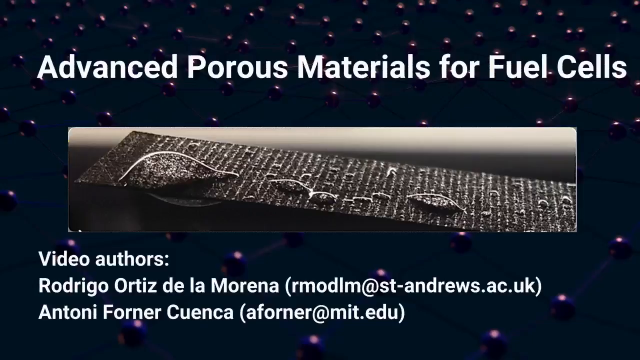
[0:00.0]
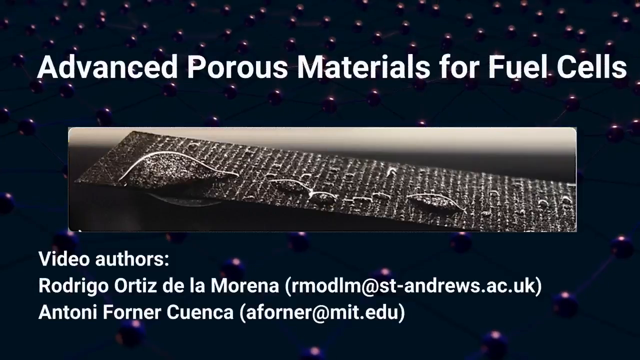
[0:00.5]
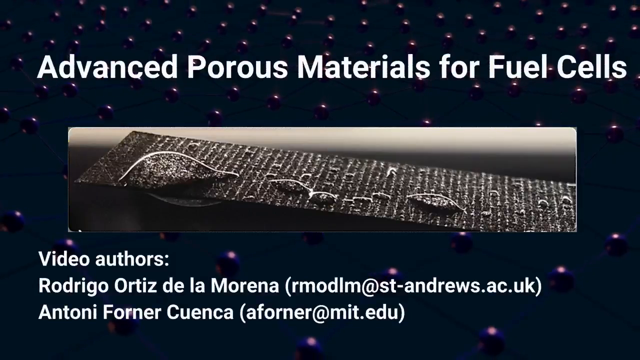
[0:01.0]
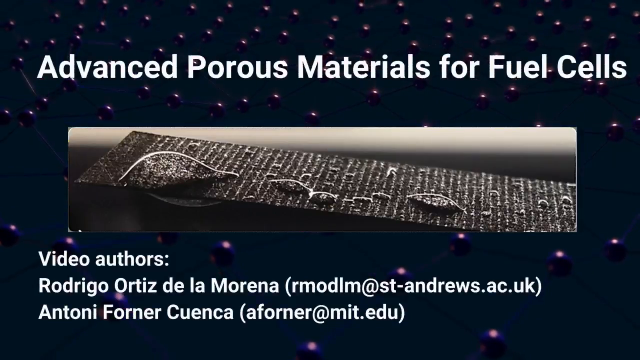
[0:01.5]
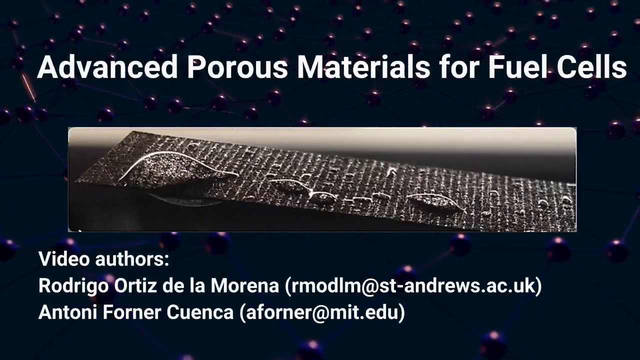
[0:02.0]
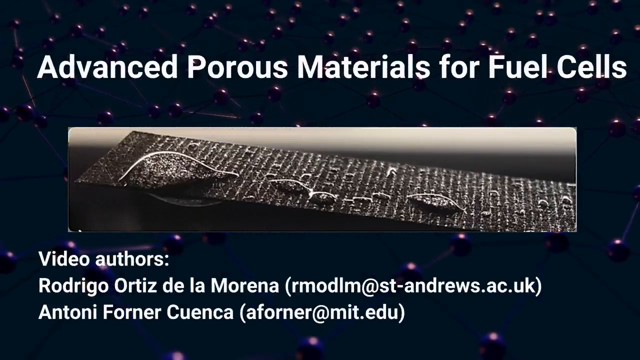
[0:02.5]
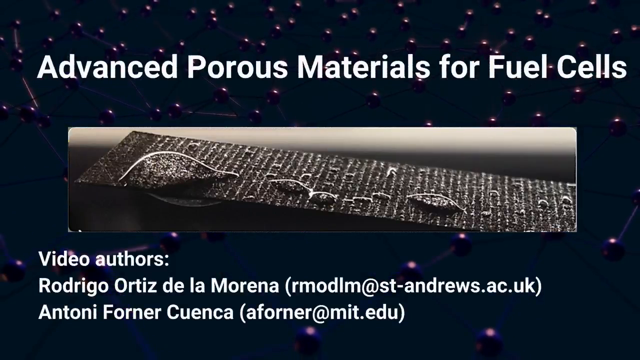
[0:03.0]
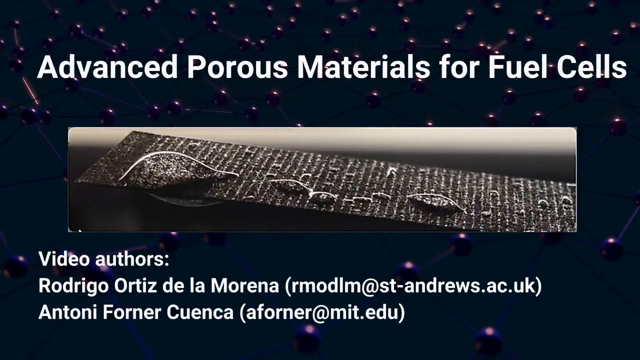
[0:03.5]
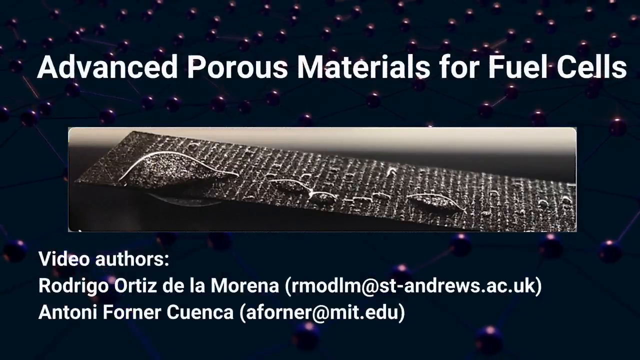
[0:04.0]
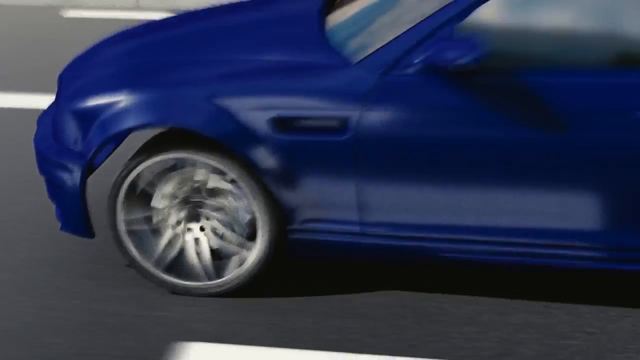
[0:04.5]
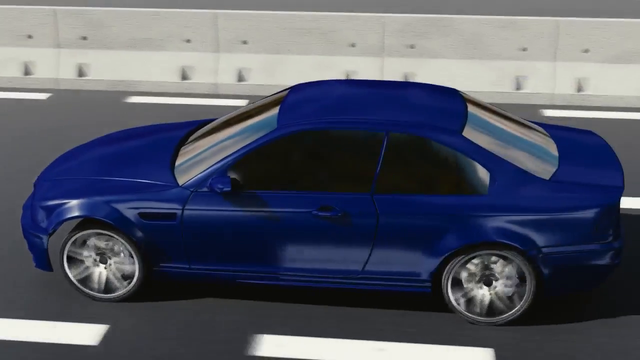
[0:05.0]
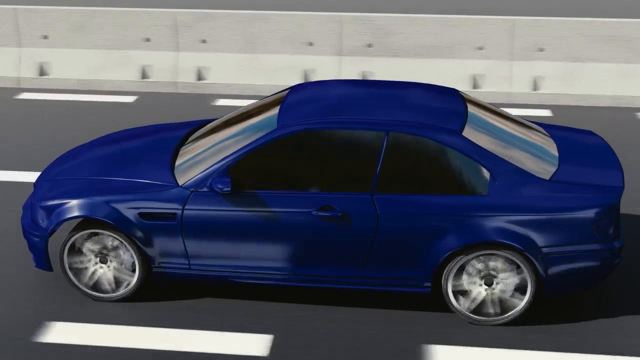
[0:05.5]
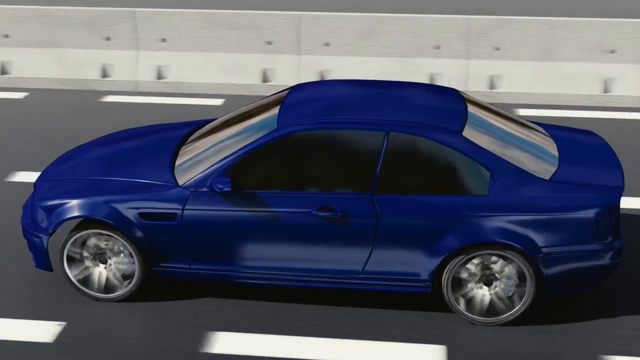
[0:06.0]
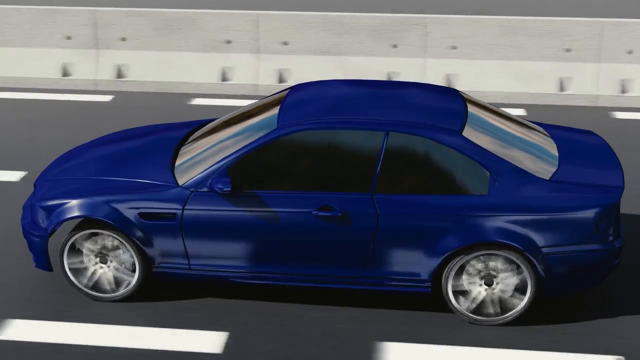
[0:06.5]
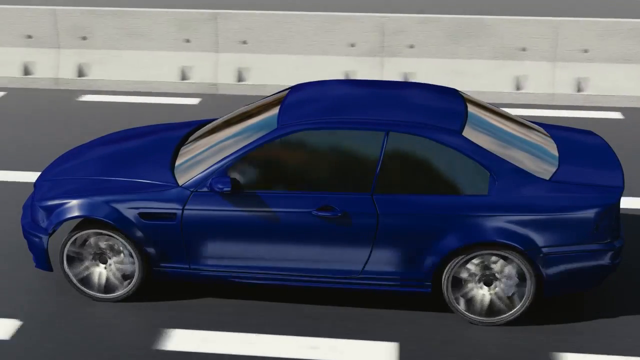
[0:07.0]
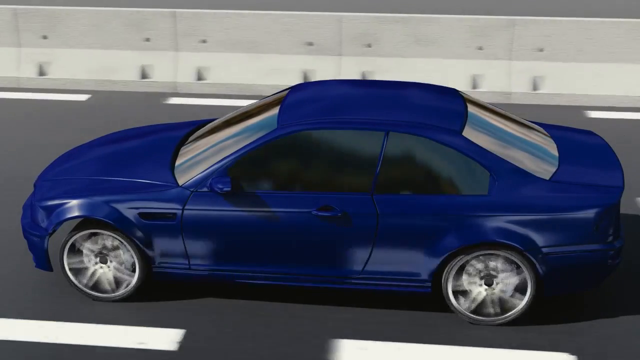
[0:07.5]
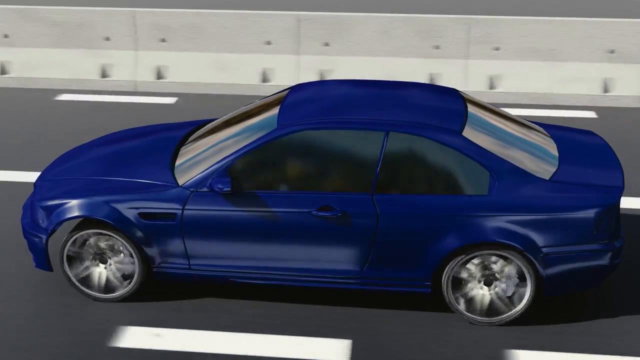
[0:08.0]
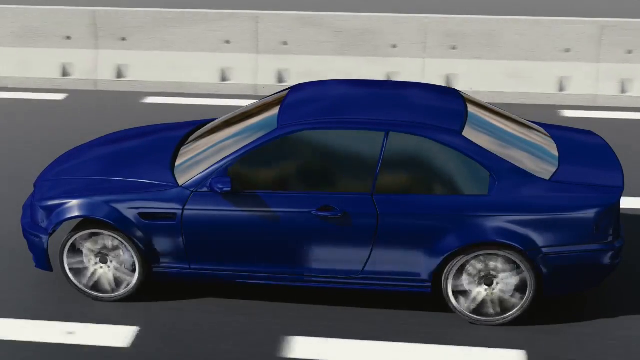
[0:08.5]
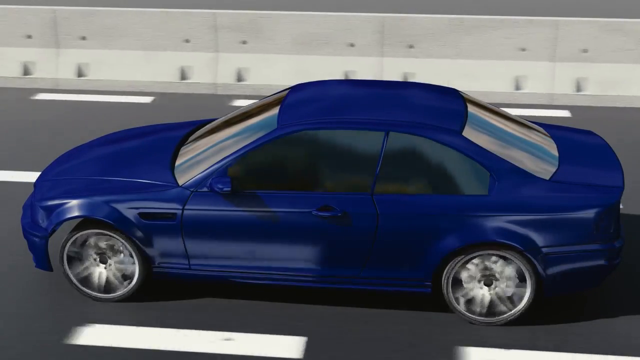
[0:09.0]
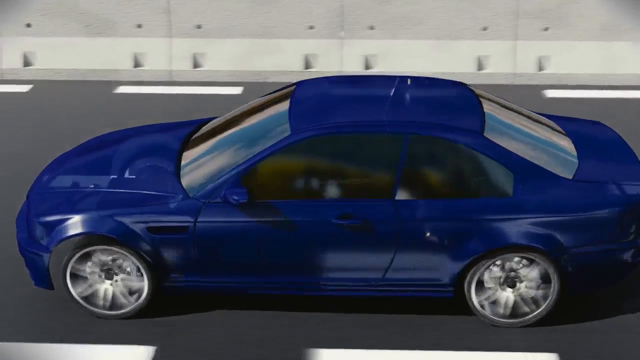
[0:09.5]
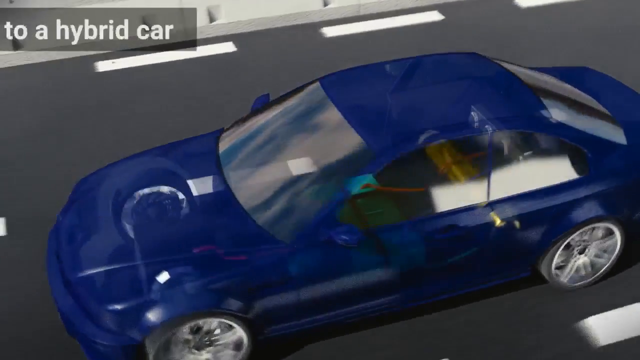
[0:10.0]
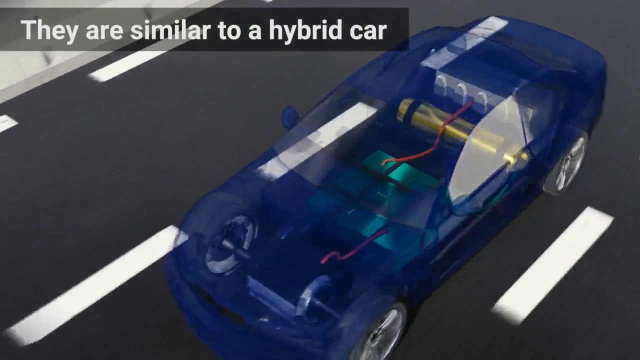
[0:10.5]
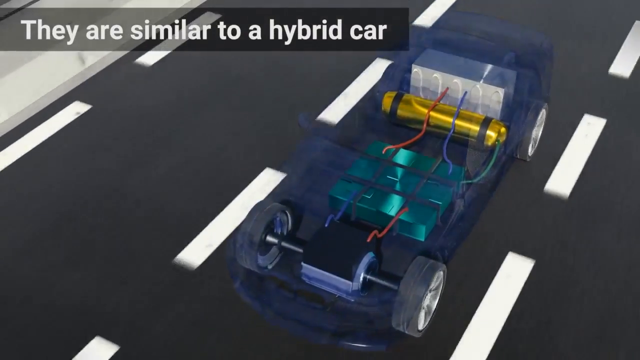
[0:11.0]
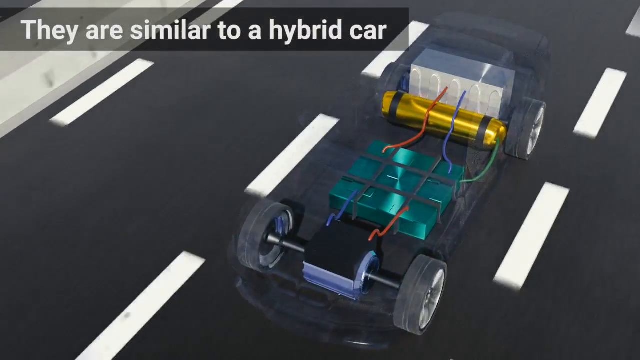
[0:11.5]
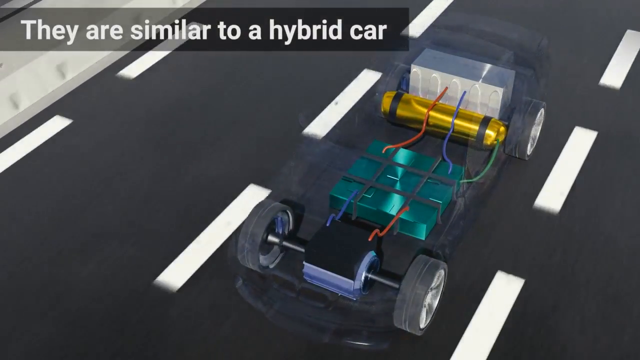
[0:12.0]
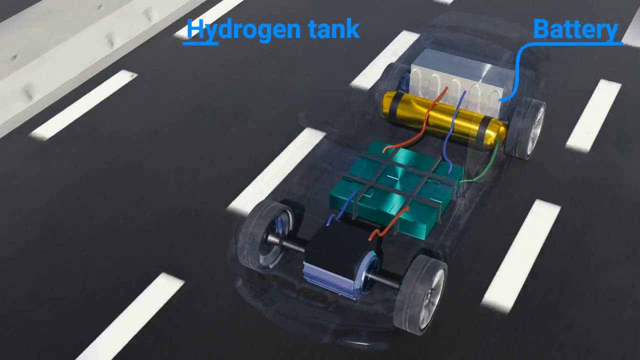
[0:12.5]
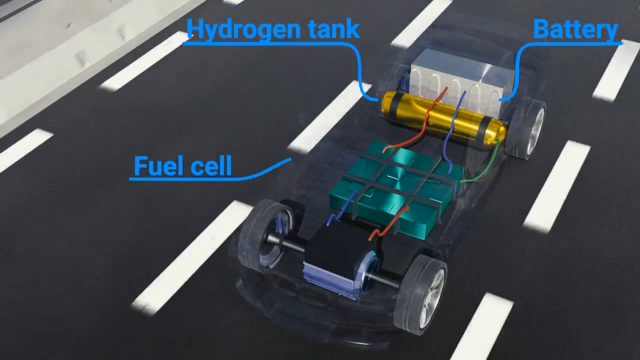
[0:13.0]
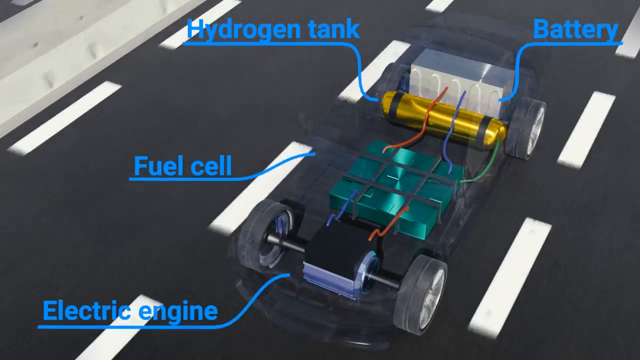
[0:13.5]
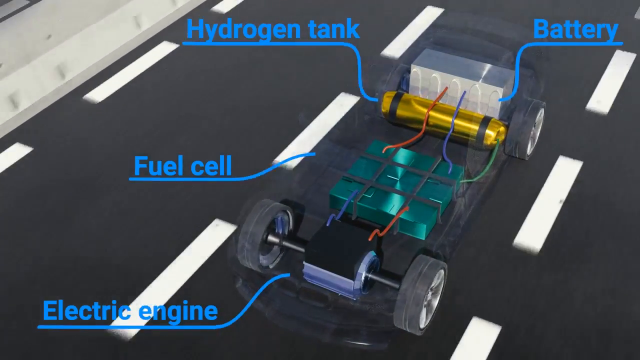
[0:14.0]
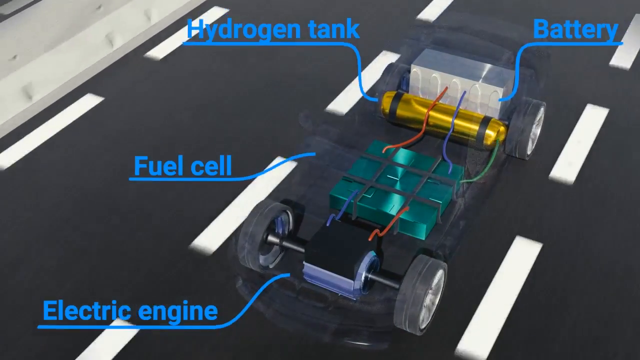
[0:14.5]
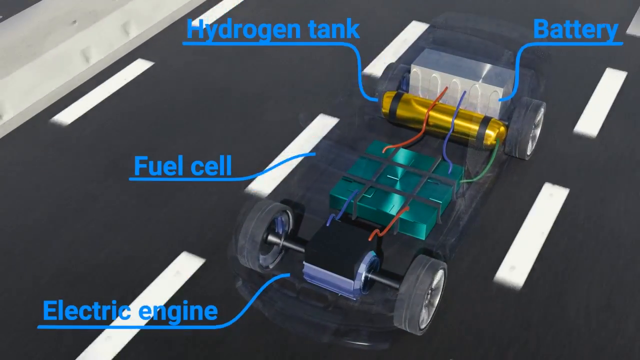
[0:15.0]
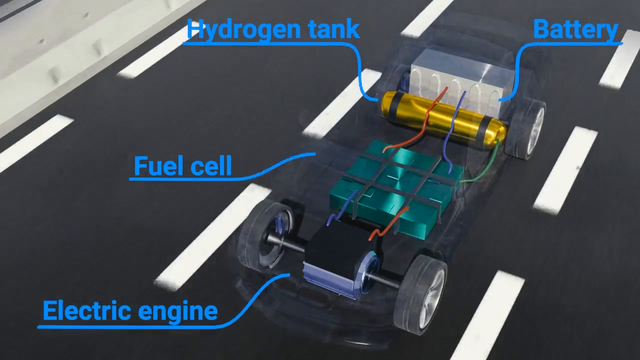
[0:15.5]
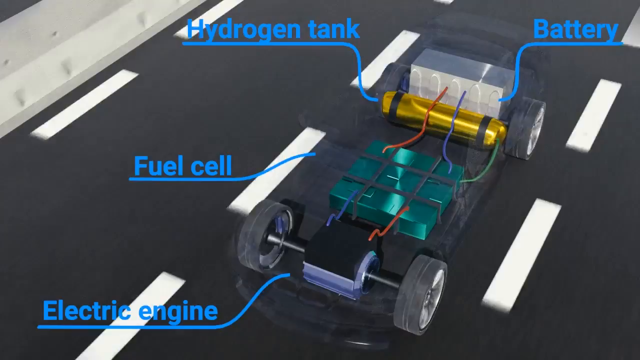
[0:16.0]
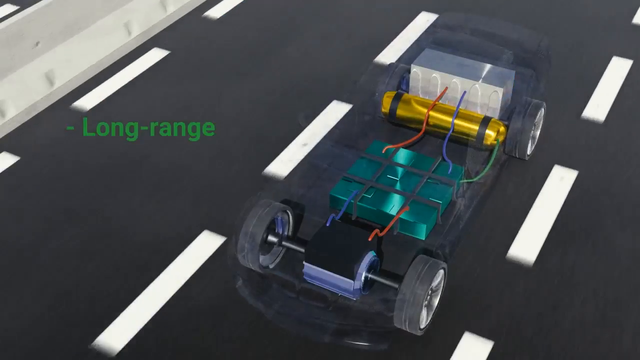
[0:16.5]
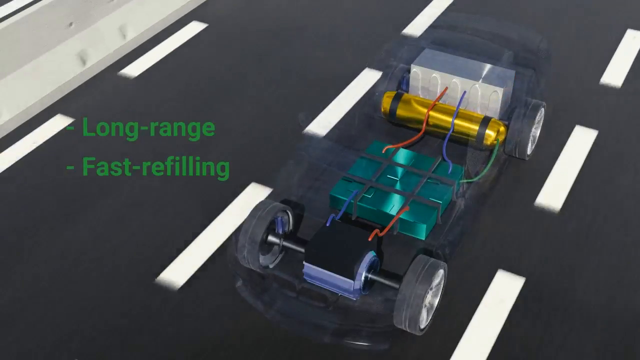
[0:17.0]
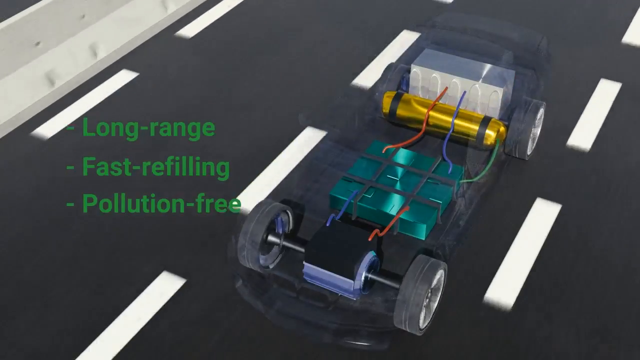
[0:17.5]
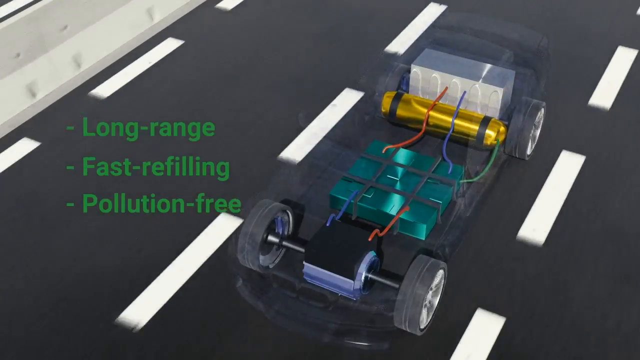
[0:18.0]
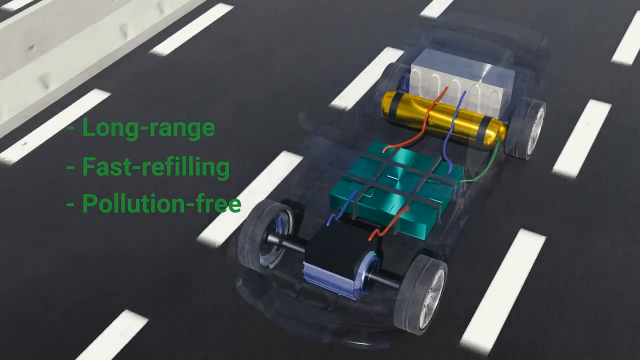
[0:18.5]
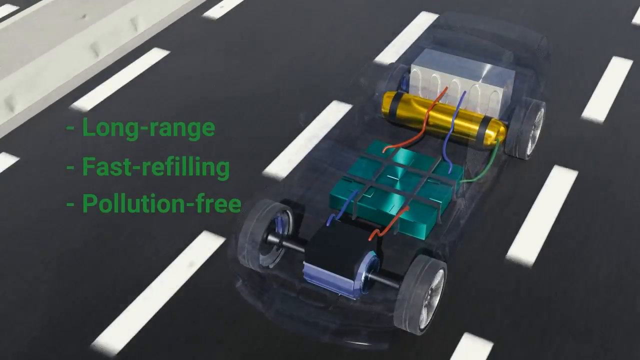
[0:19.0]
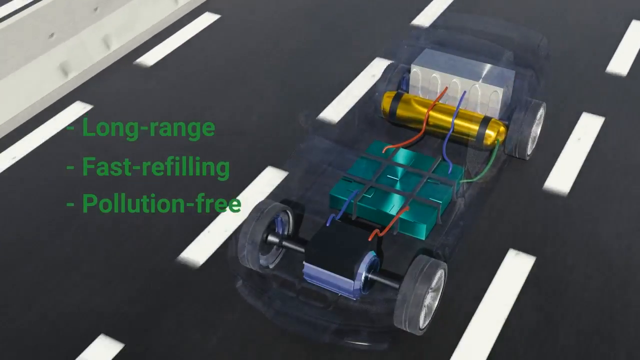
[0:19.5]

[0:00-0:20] An open, dark blue grid background, apparently CGI, holds small blue spheres, with lighting that seems to come from the top. White text across the top reads "Advanced Porous Materials for Fuel Cells." Beneath it is a black-and-white image of a thin rectangular object that looks perhaps like a dryer lint trap or a piece of seaweed, with a rough, fabric-like texture, large white threads woven through it, and white lines that indicate something like cells. White text beneath lists the video authors: Rodrigo Ortiz de la Morena, with "R-M-O-D-L-M at st.andrews.ac.uk" in parentheses, and Anthony Forner-Koenka, "aforner at mit.edu." The balls bounce up and down, with drop shadows beneath them. The video cuts to a CG image of a sleek blue two-door car driving down a highway, with a road beneath it marked by two dotted lines and a concrete barrier beyond it in the upper background. The car moves toward the left of the screen as the camera pans up and to the right, looking down at it. The car's chassis turns translucent, revealing a computer diagram of the interior, without the seats, with an electric engine up front. A gray caption box in the upper left holds white text stating that they are similar to a hybrid car; that caption then goes away. Blue text with arrows appears to highlight parts of the diagram: toward the back, a large white rectangular block labeled "battery" spans the whole width of the car and takes up most of the back. A red wire and a blue wire lead from it to three blue rectangular tanks across the bottom middle of the car, which are at first unlabeled. A gold cylinder next to the battery is labeled "hydrogen tank." Other wires feed into a block at the front connected to the axle of the front wheels, the "electric engine." After a second the blue tanks in the middle are labeled "fuel cell," and the car keeps driving. The labels disappear after a moment and are replaced with green bullet points: "long-range," "fast refilling," and "pollution-free."